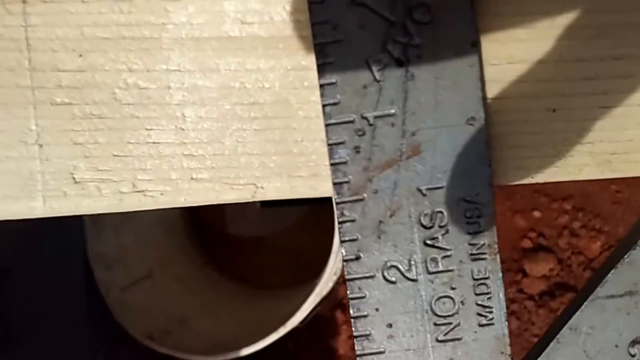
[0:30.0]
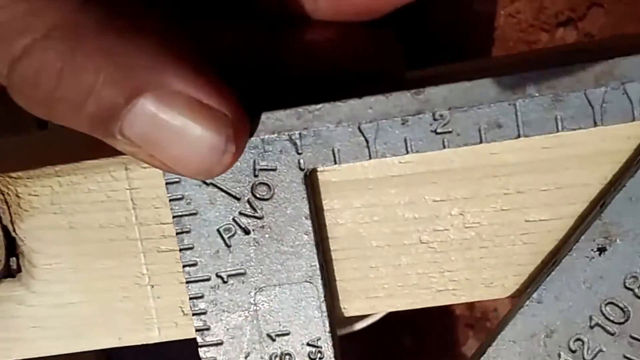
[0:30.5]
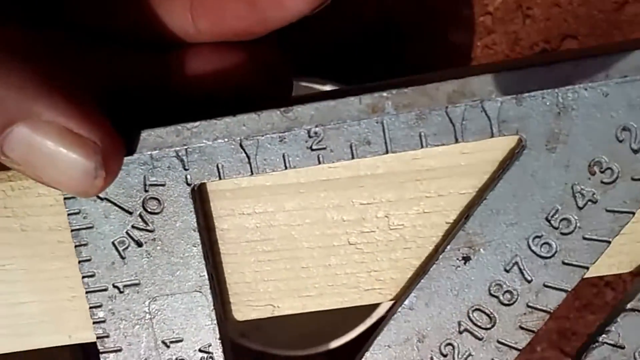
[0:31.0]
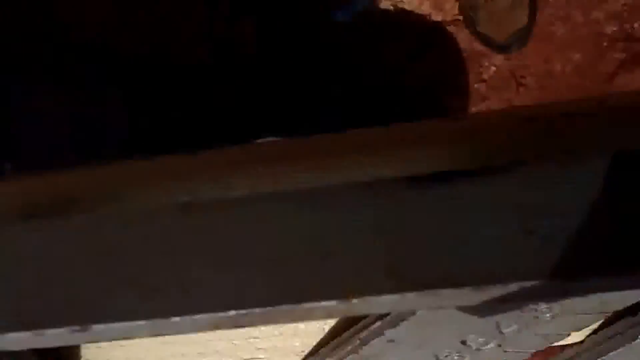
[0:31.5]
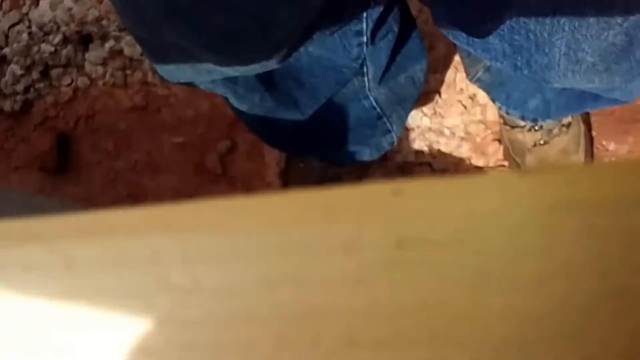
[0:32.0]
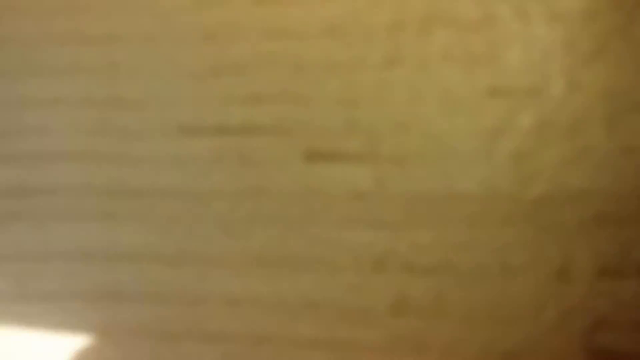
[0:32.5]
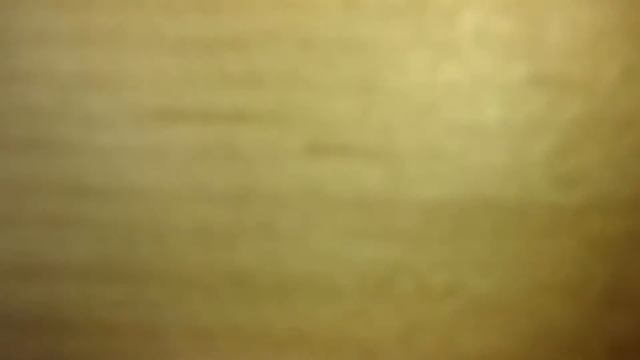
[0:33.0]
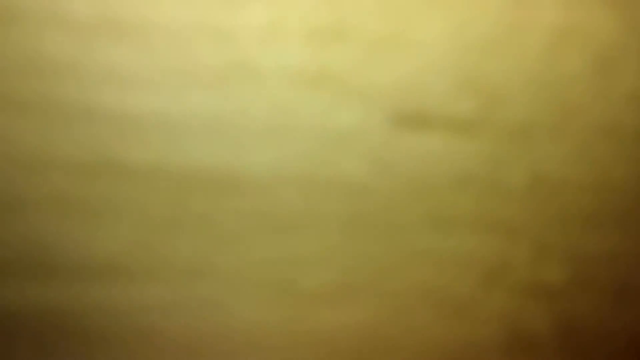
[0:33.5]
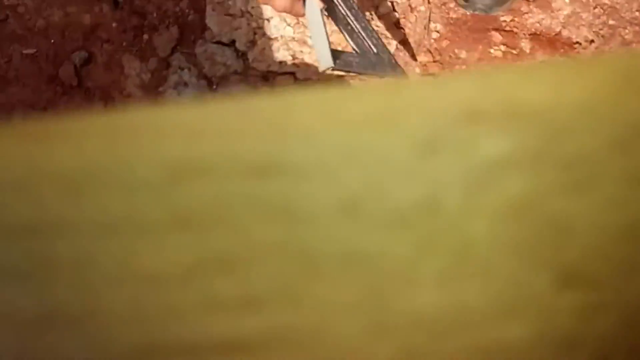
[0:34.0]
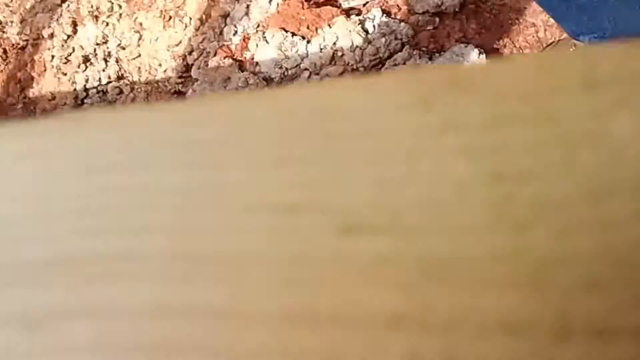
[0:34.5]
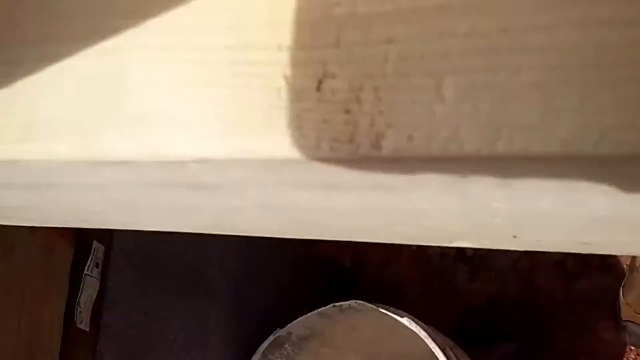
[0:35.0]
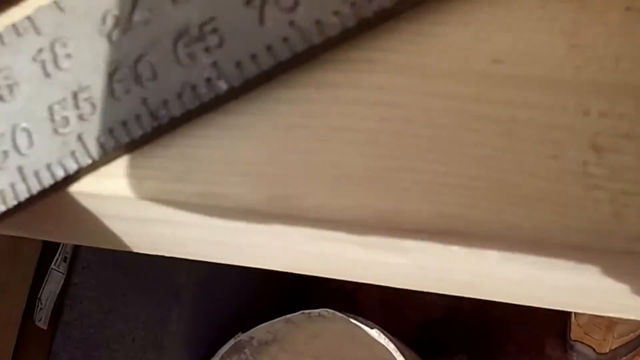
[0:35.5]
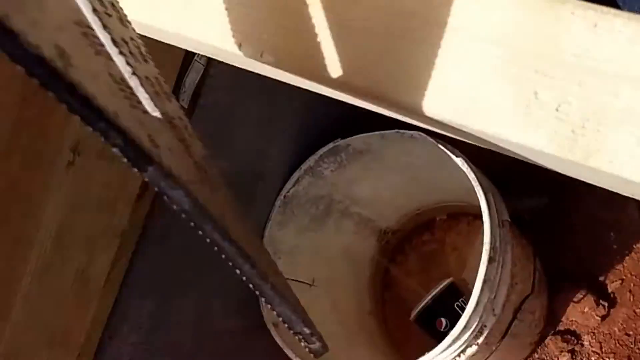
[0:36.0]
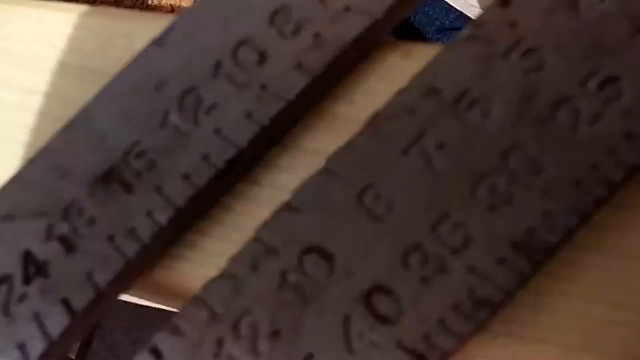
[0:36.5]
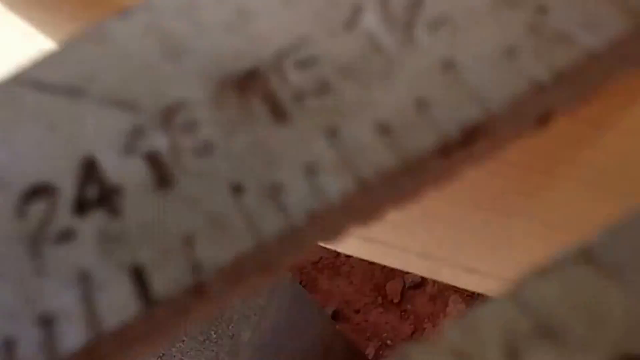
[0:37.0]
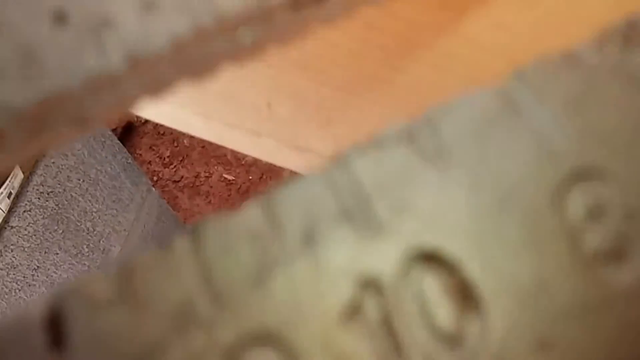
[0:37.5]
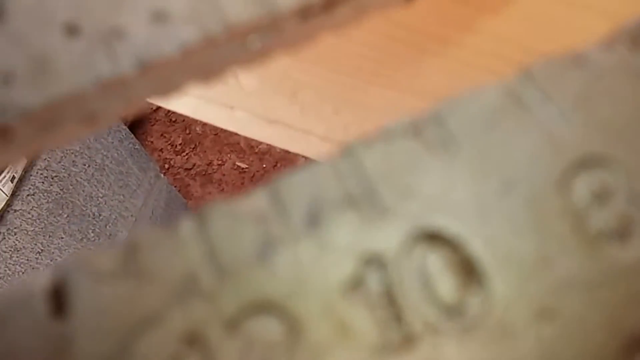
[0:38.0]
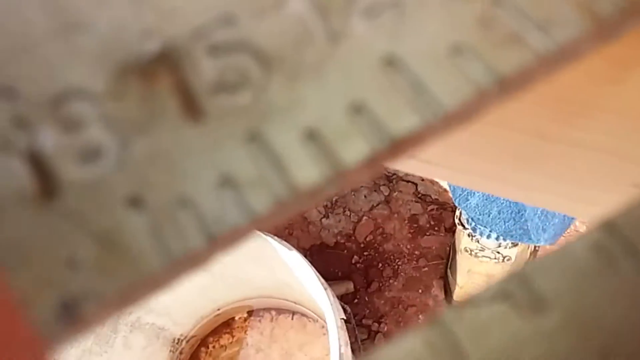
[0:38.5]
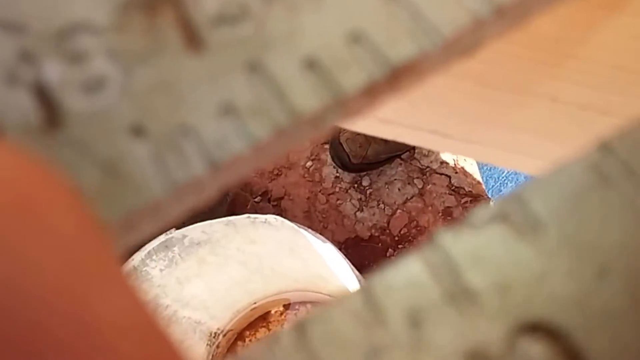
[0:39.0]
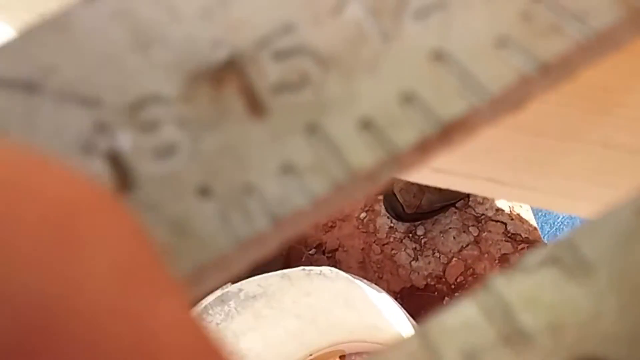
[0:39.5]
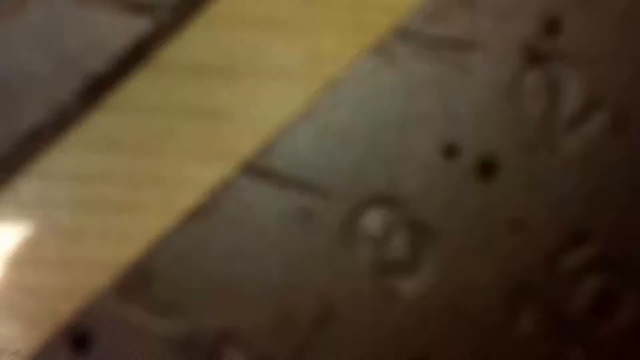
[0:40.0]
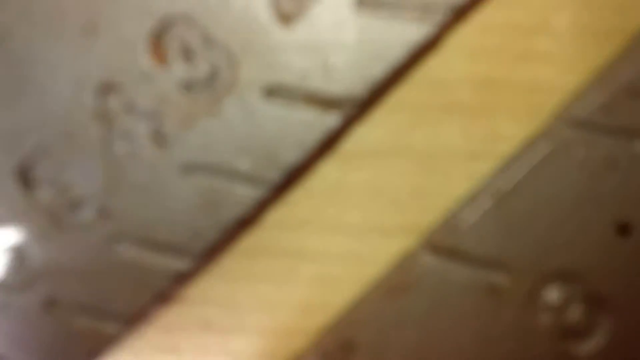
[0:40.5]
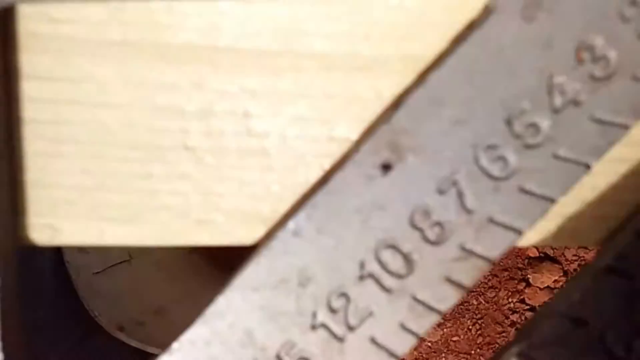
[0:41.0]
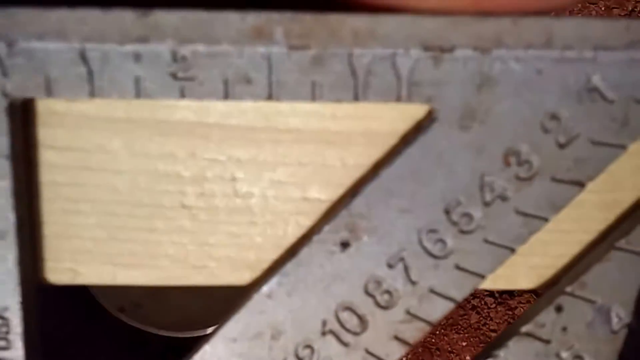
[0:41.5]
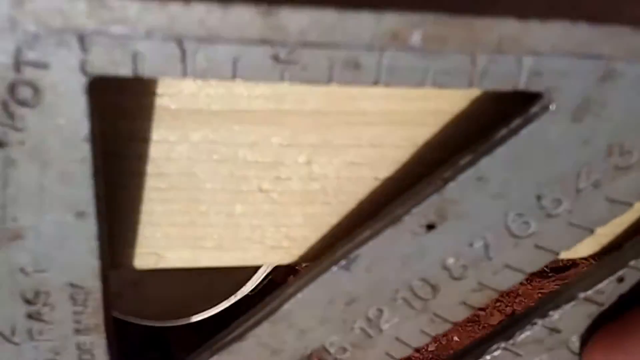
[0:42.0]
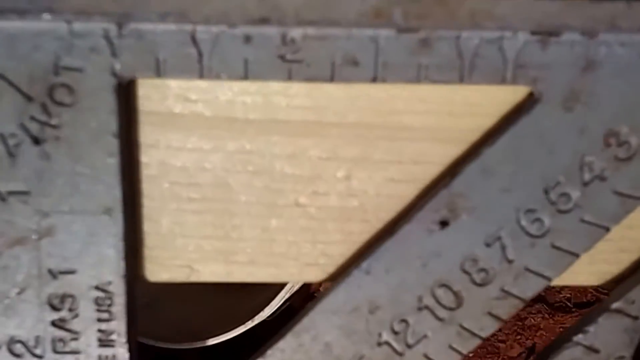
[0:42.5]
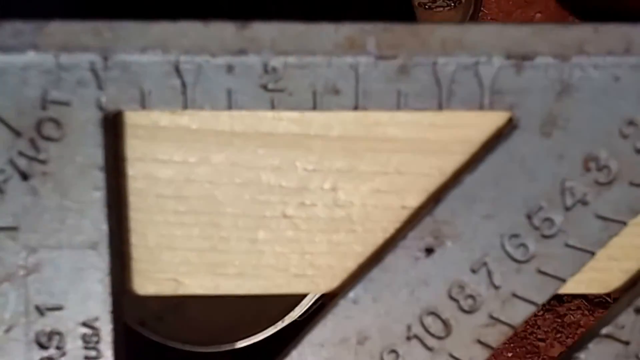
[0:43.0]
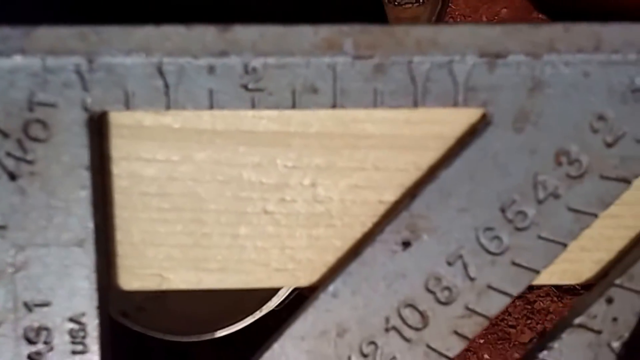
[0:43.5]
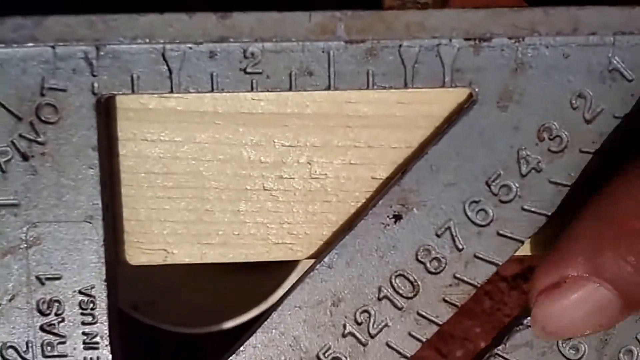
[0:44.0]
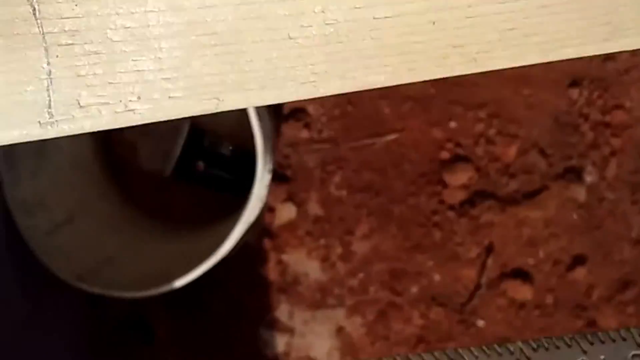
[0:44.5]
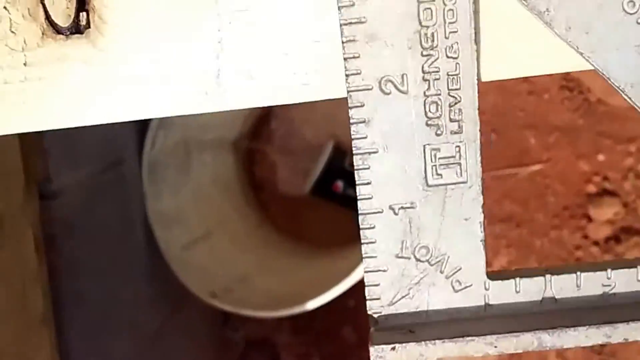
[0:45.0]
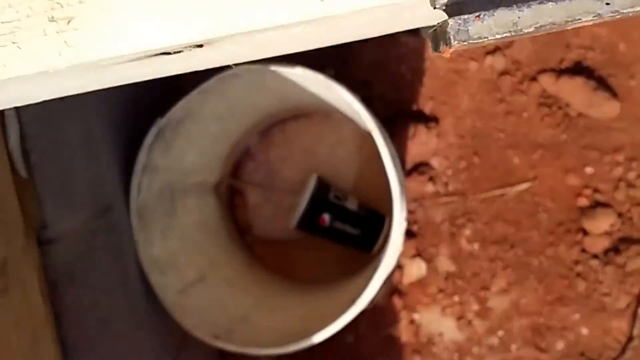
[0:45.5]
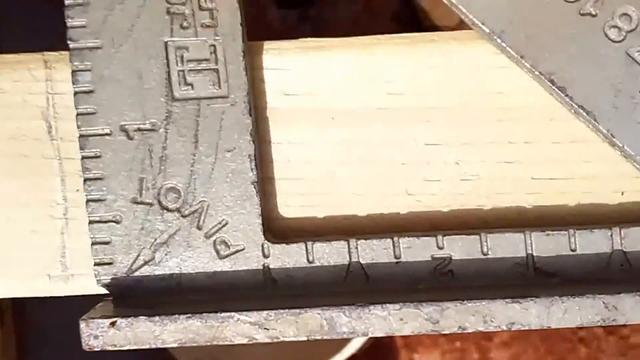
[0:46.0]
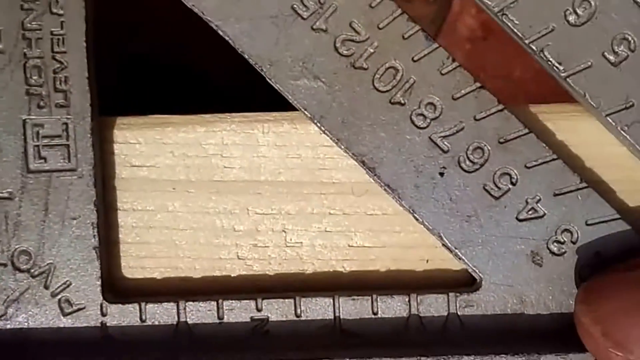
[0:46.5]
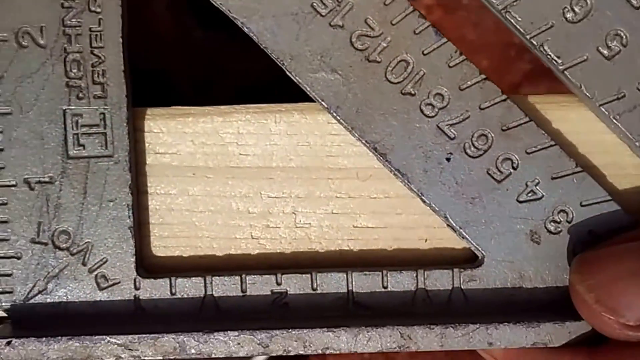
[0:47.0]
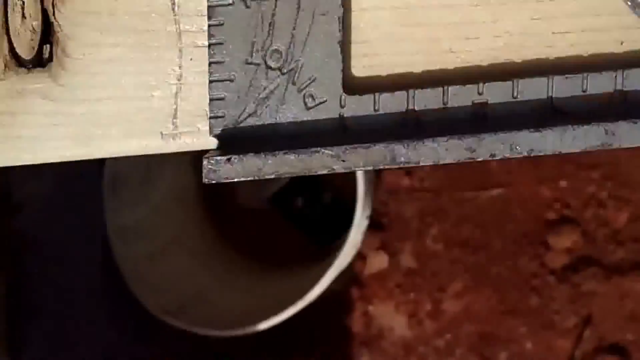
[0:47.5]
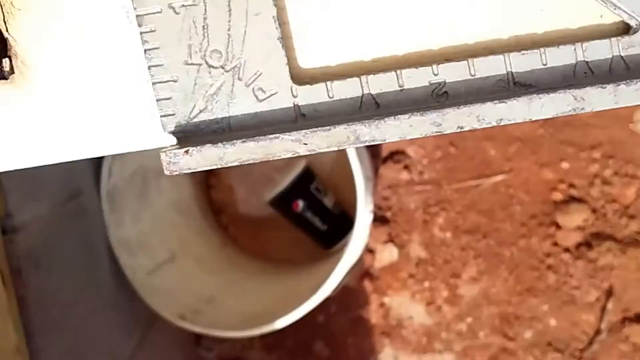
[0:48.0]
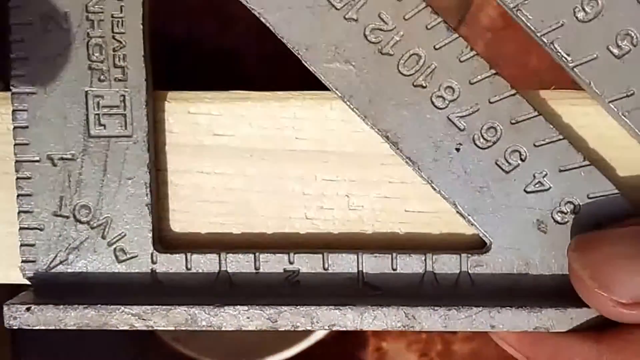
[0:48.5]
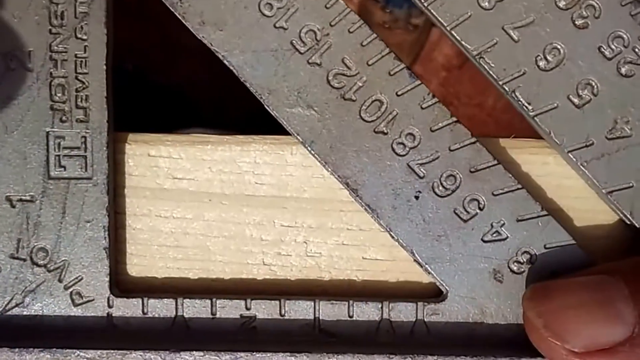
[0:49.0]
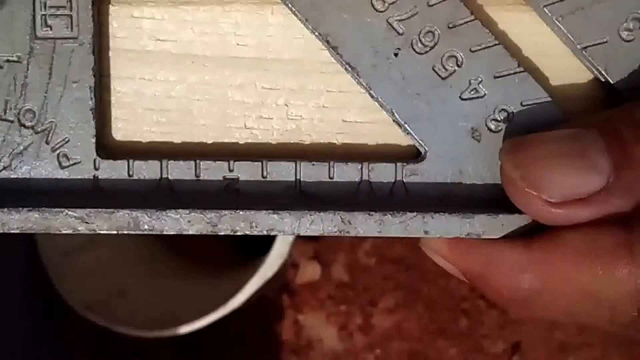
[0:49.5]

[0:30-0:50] Footage shows a man making what looks like a calculation while holding a metal triangle ruler in his hands. The numbers on the ruler count in different sets, such as 5, 10, 15, 20, 25, and sets of 2 and 3. A bucket is under the piece of wood he is measuring. The man's hand is visible, and a man wearing blue jeans and brown shoes stands and helps him. Closer shots of the ruler show the word "pivot" at the corner. More angles show the man making calculations, and the man's shadow from the sun shows that the men are working outside.